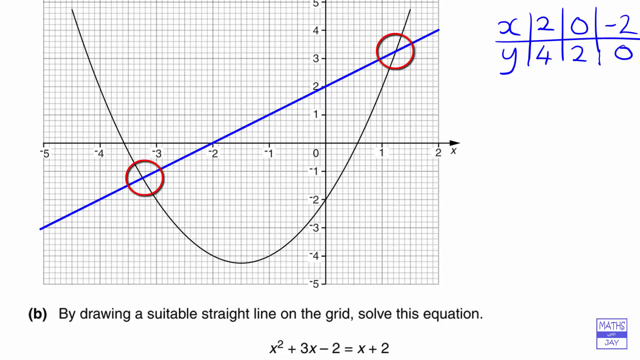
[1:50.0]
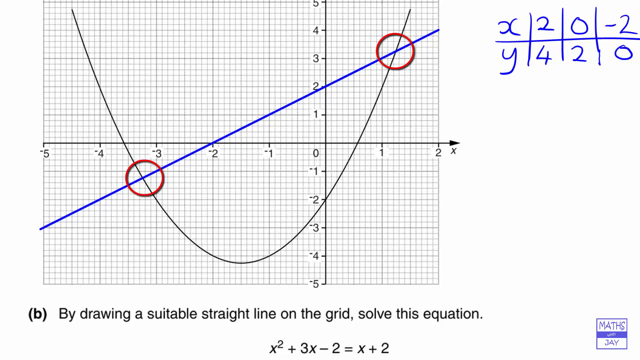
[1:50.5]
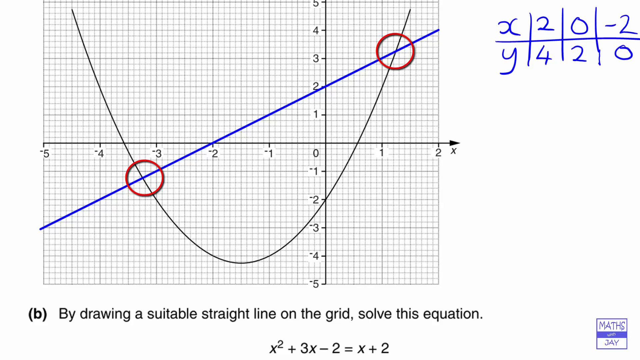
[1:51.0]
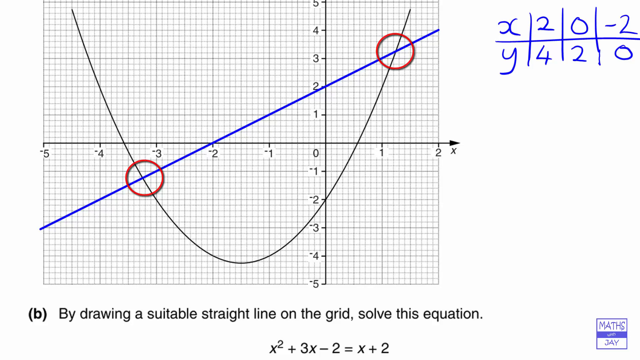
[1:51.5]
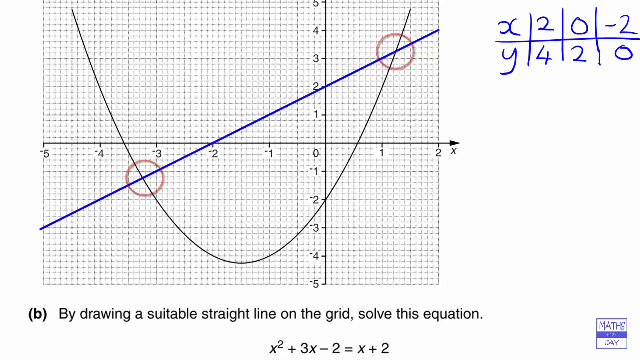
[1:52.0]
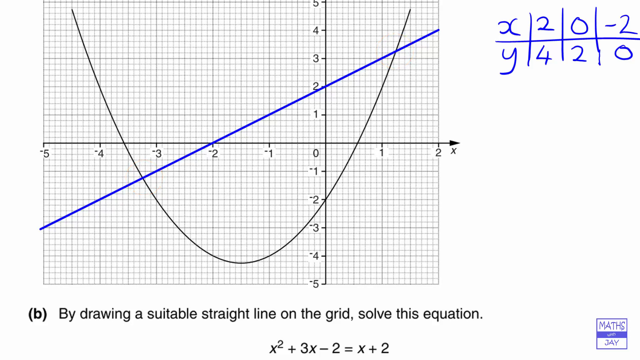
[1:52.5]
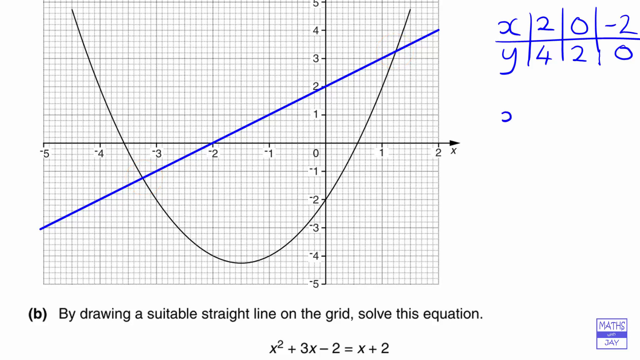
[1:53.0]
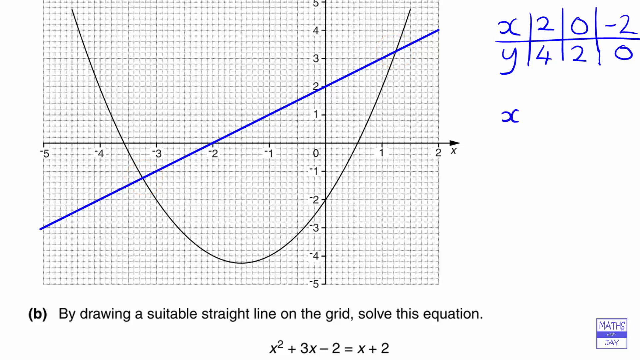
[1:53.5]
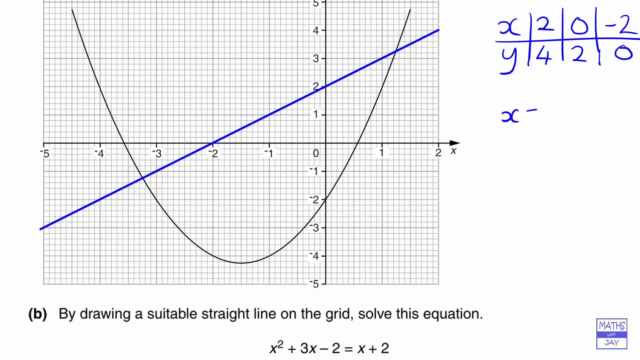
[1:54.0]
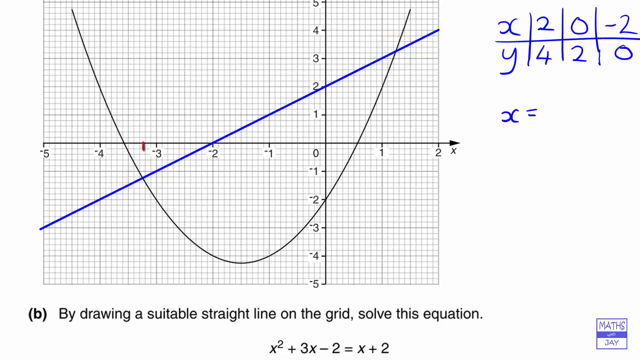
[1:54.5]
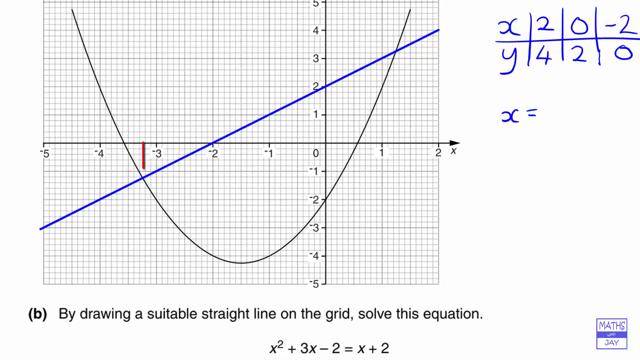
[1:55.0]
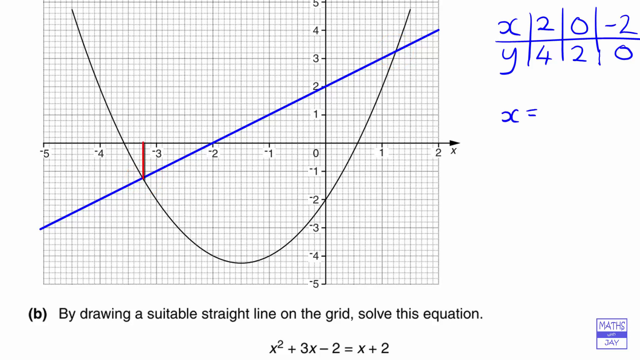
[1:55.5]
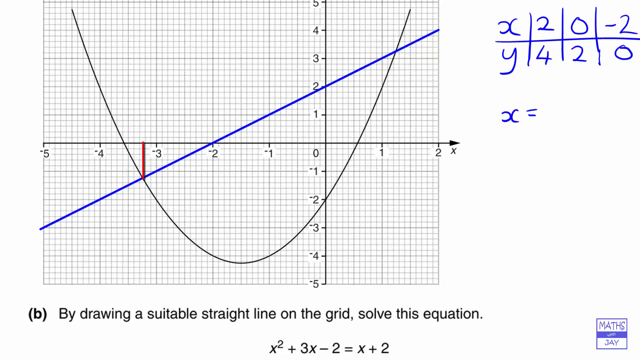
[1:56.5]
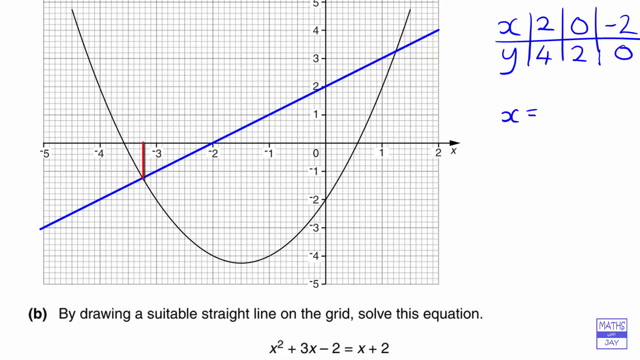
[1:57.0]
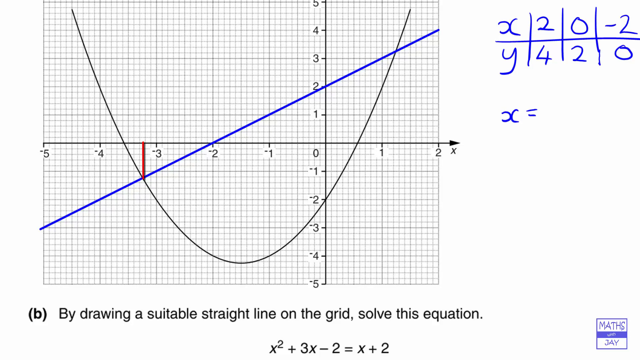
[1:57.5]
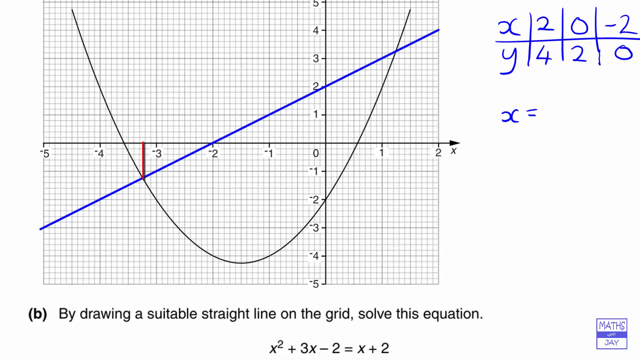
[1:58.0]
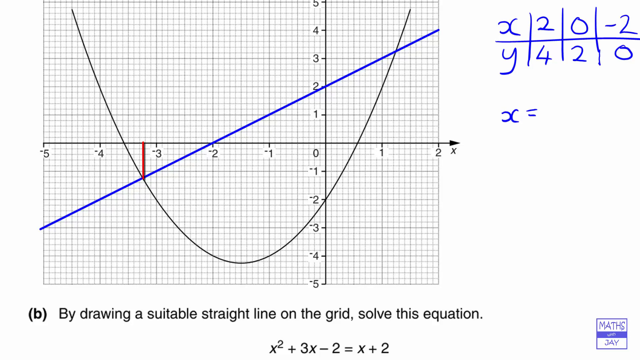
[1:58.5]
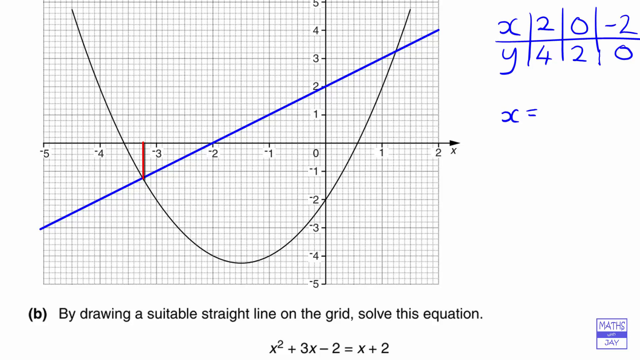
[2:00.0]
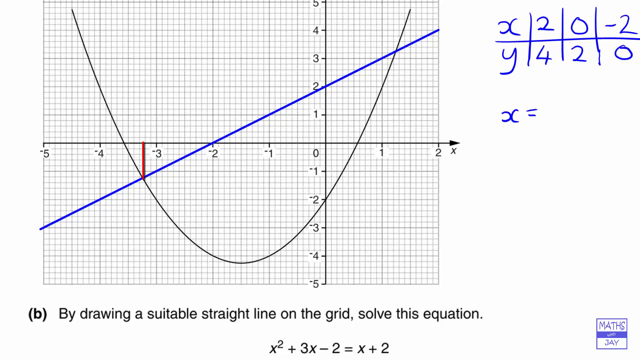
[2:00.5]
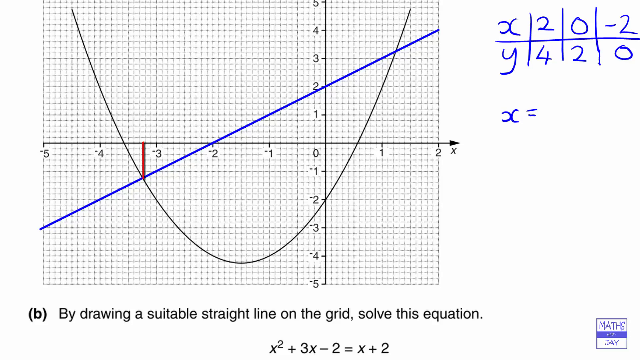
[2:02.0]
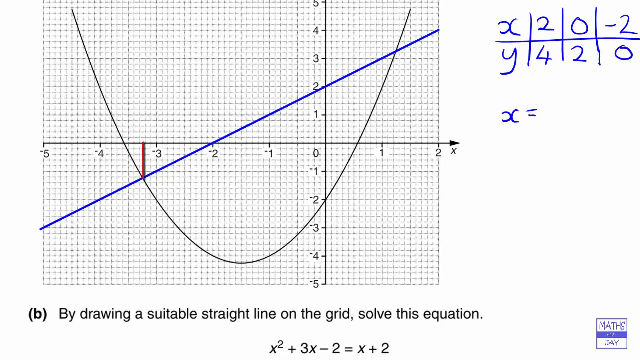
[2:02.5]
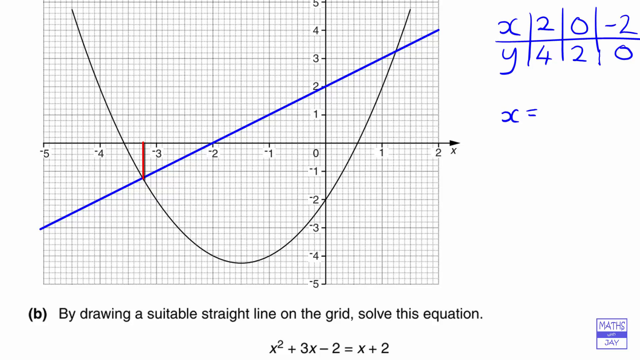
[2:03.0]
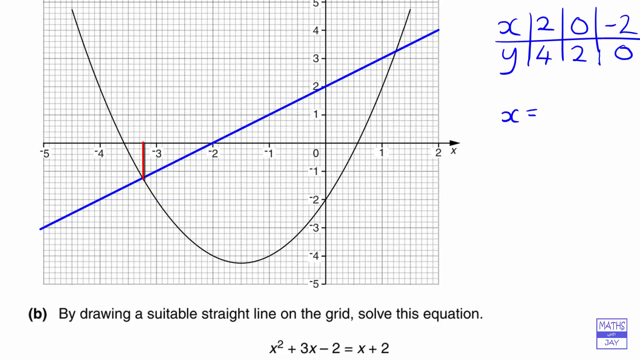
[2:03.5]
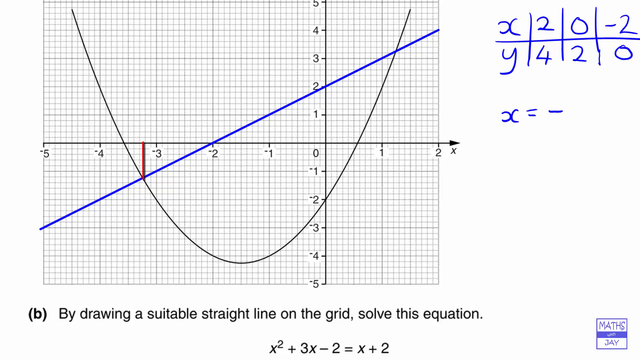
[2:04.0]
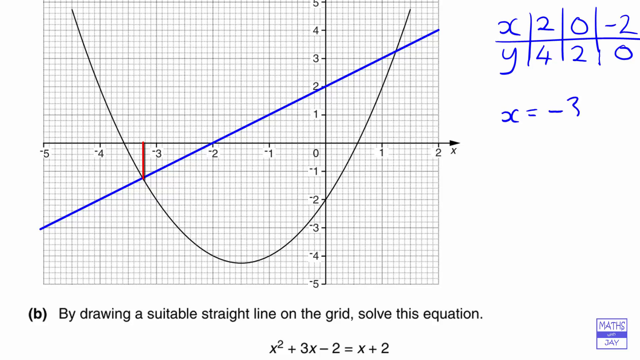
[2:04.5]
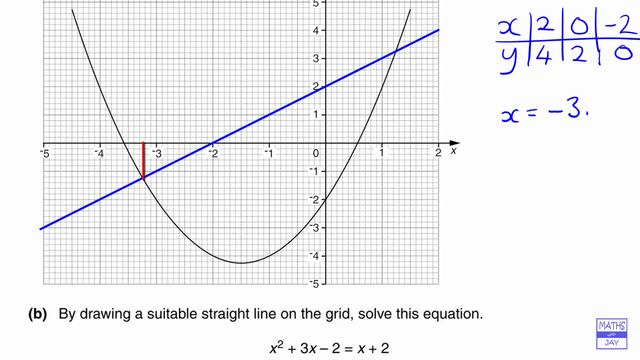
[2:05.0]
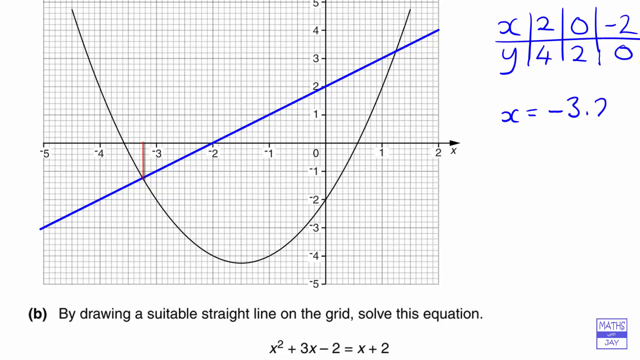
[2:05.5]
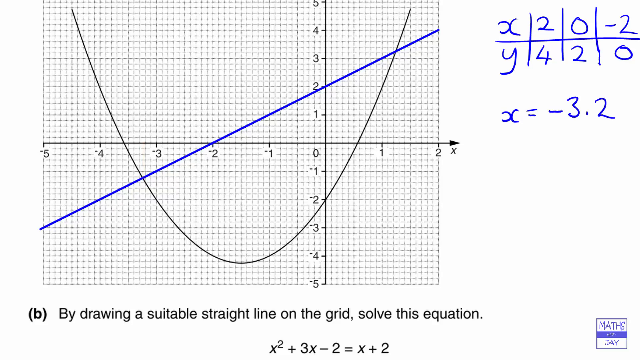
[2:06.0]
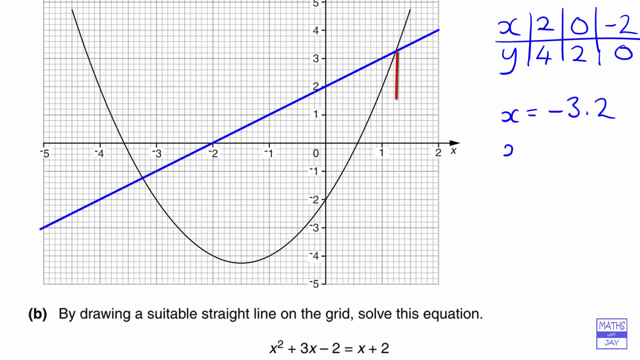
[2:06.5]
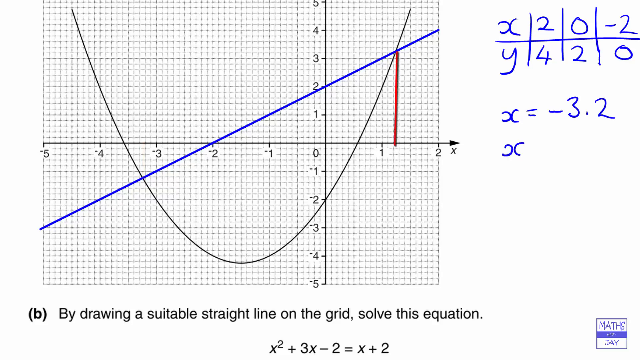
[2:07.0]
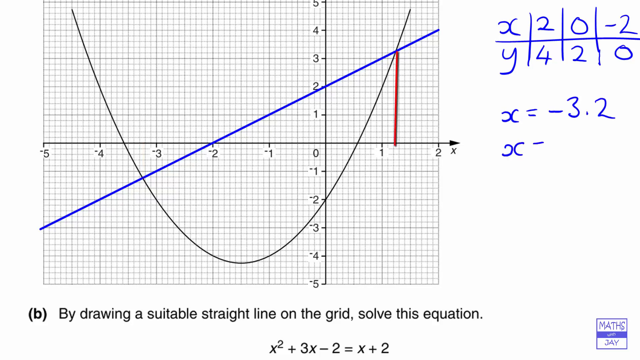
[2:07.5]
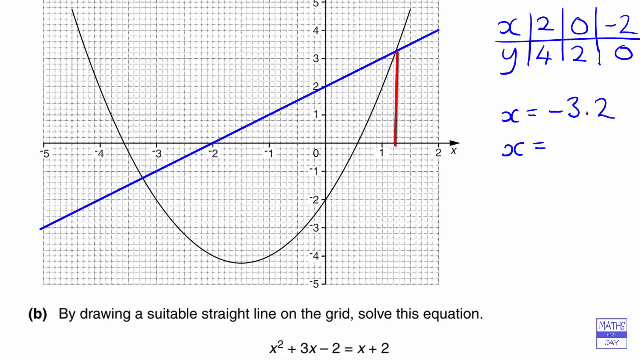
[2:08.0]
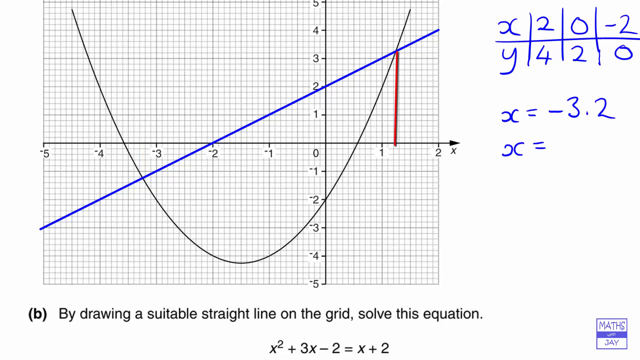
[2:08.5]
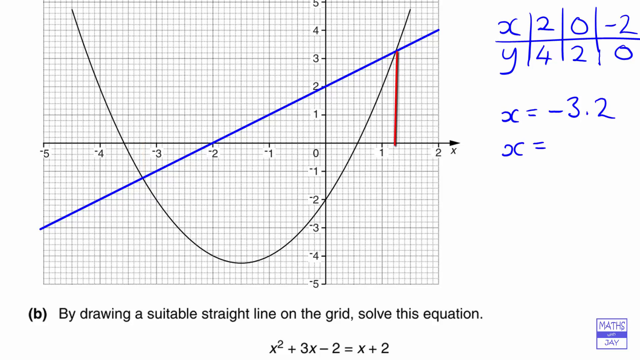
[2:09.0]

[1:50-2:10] The circle marks the joining point where the blue line crosses the graph. Writing then appears showing x equal to −3, or 0.2.